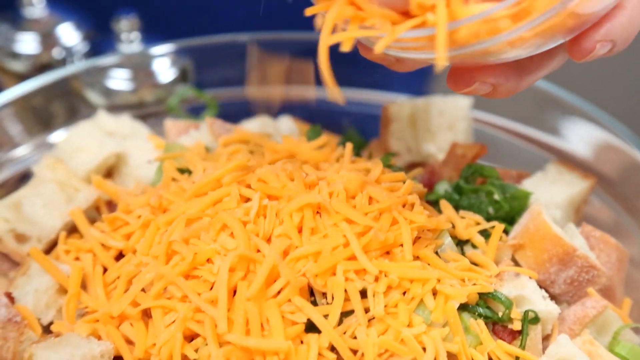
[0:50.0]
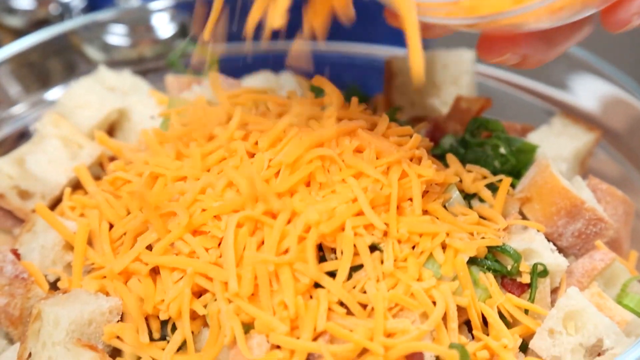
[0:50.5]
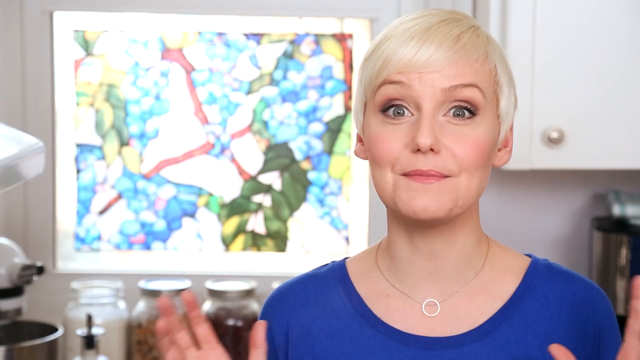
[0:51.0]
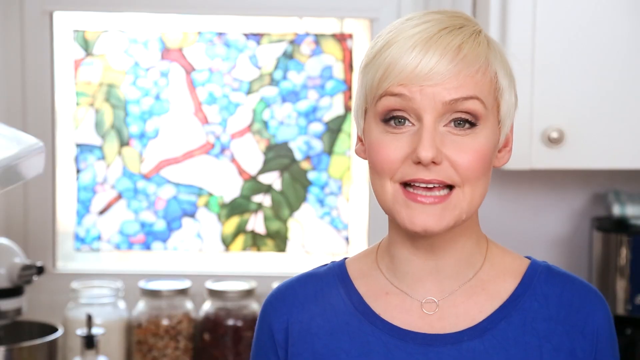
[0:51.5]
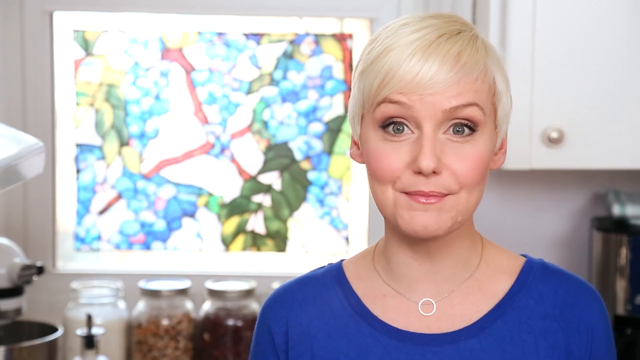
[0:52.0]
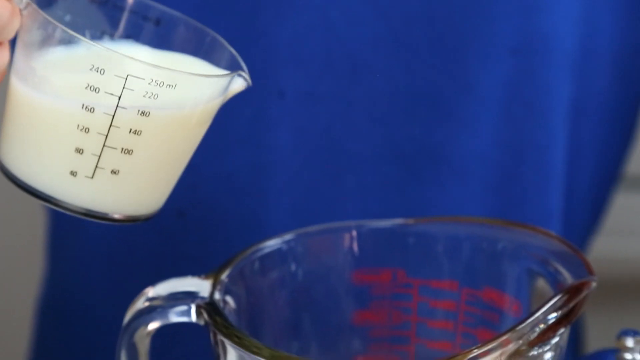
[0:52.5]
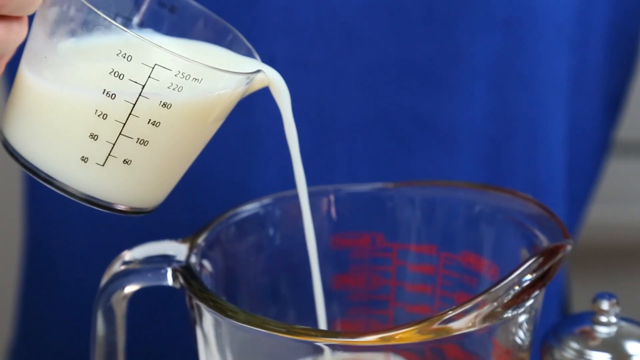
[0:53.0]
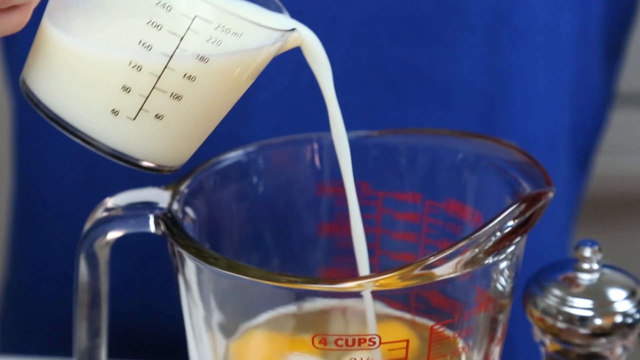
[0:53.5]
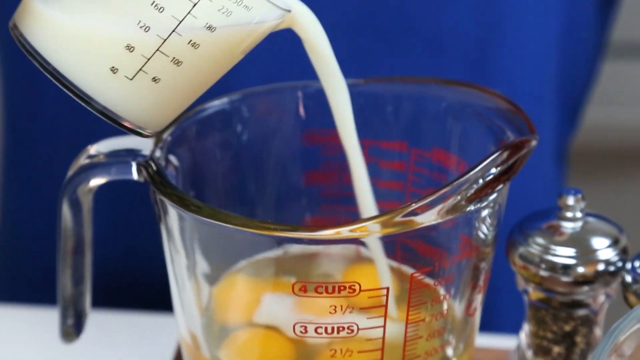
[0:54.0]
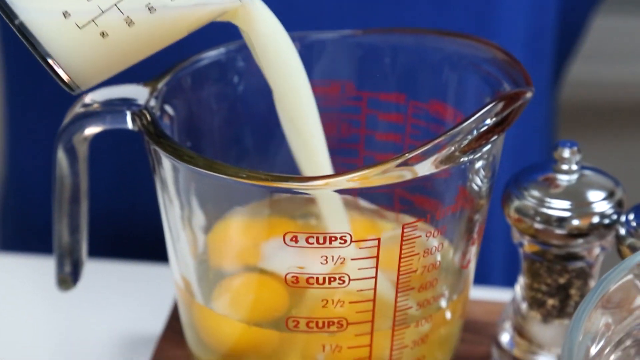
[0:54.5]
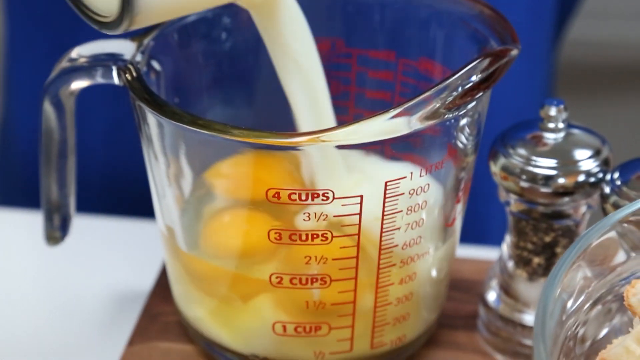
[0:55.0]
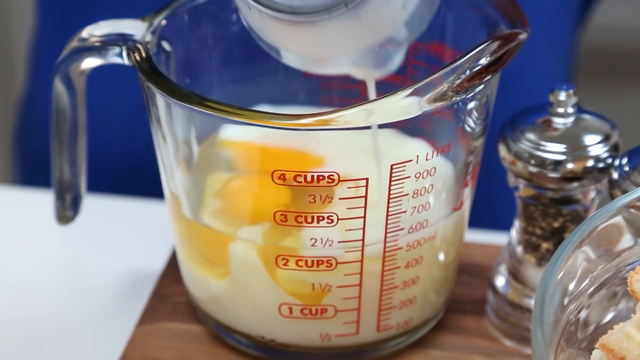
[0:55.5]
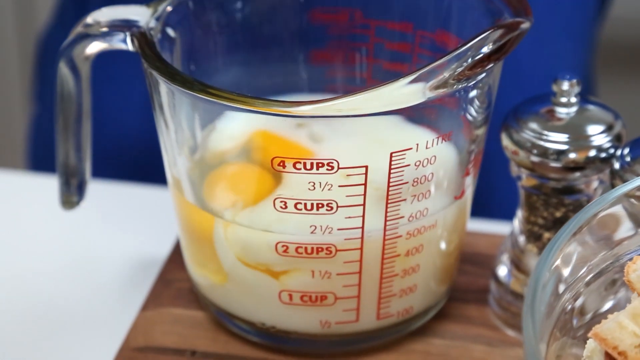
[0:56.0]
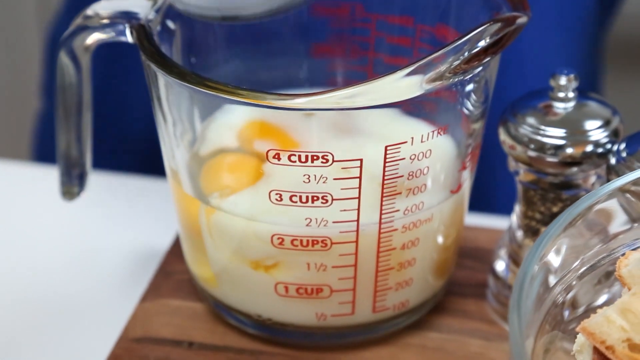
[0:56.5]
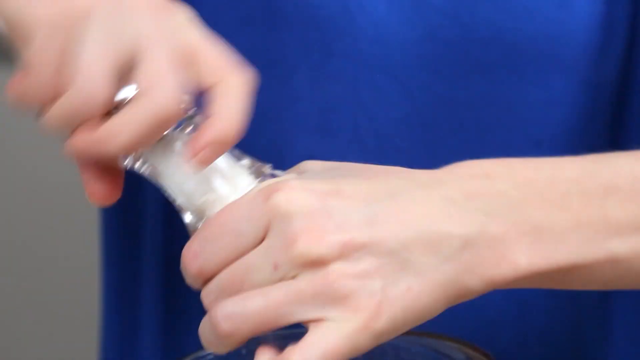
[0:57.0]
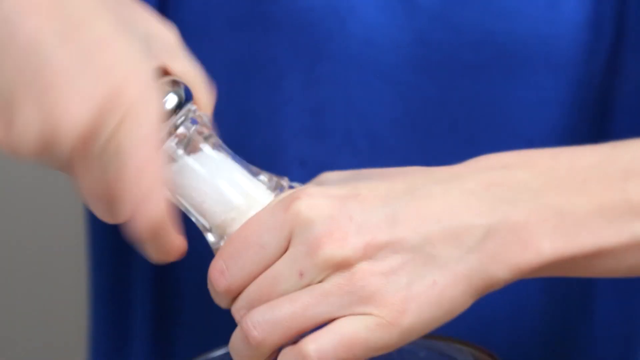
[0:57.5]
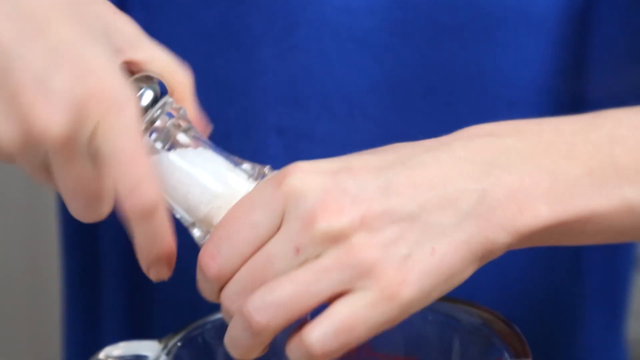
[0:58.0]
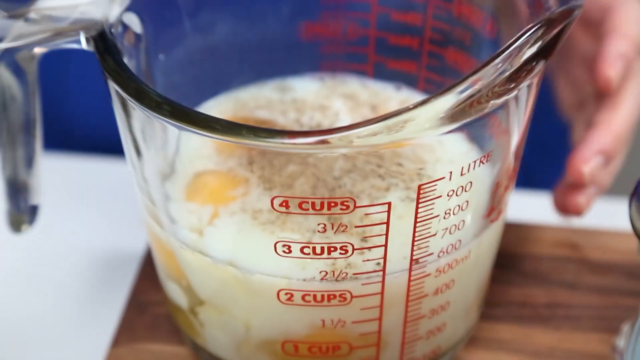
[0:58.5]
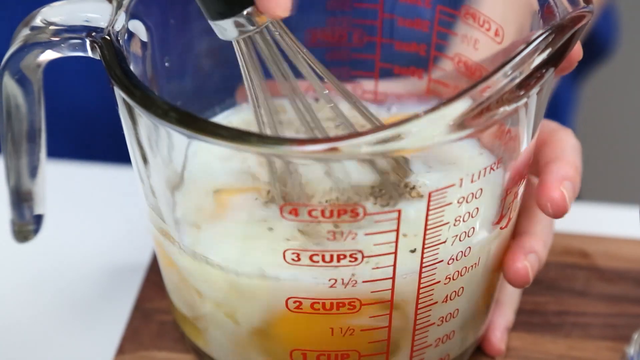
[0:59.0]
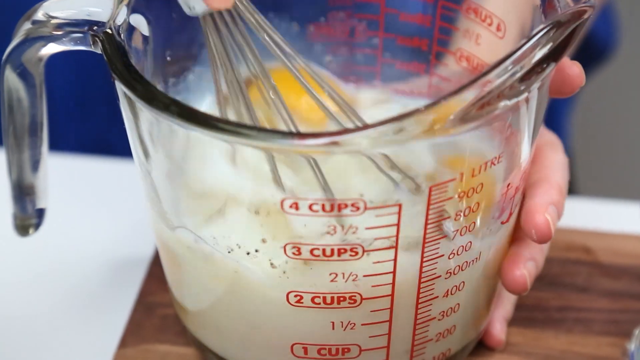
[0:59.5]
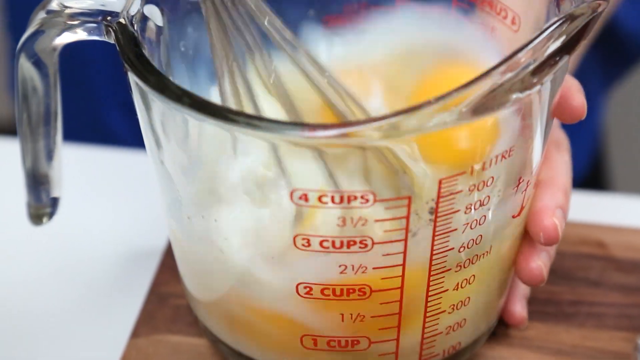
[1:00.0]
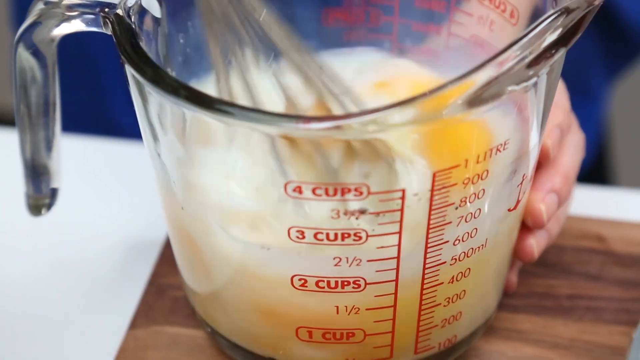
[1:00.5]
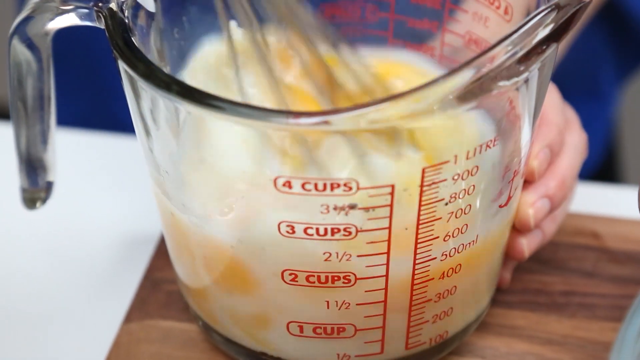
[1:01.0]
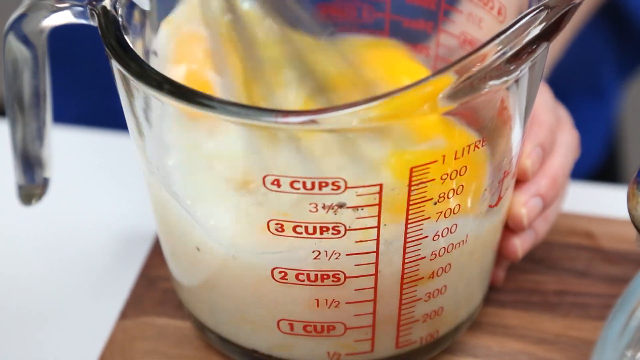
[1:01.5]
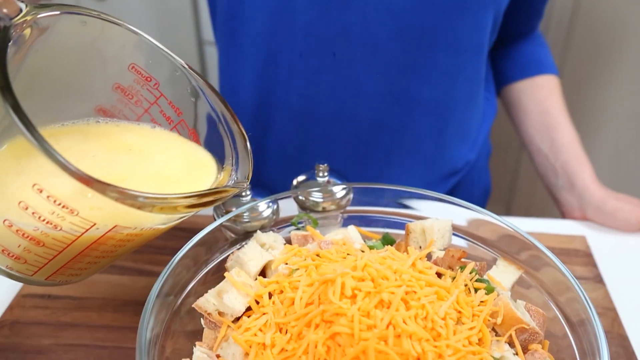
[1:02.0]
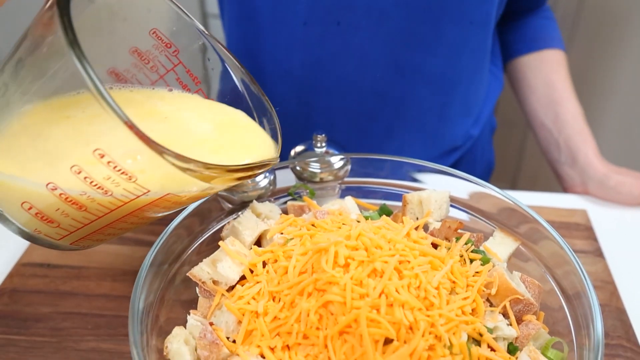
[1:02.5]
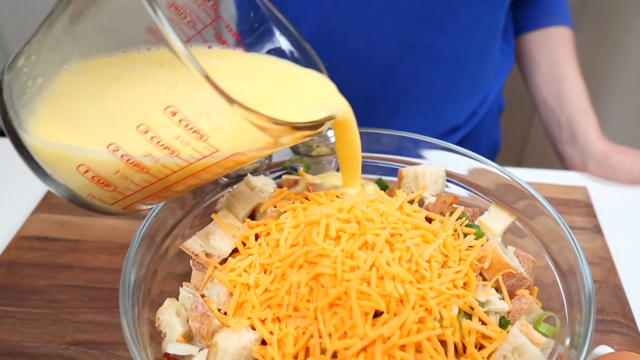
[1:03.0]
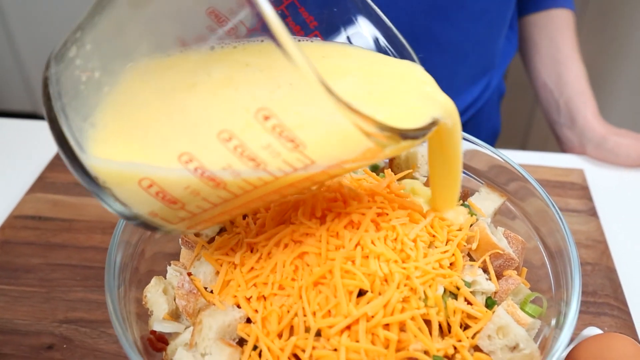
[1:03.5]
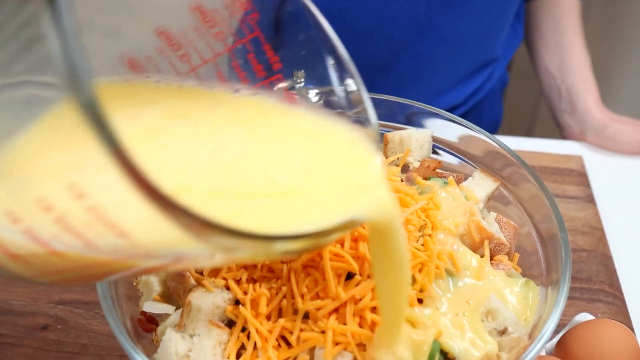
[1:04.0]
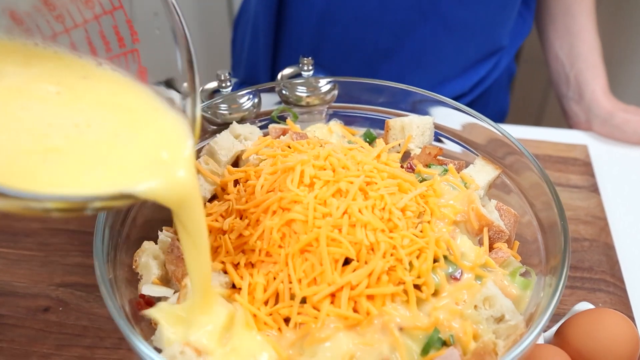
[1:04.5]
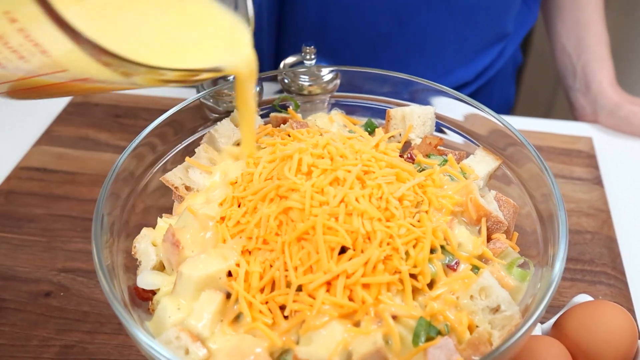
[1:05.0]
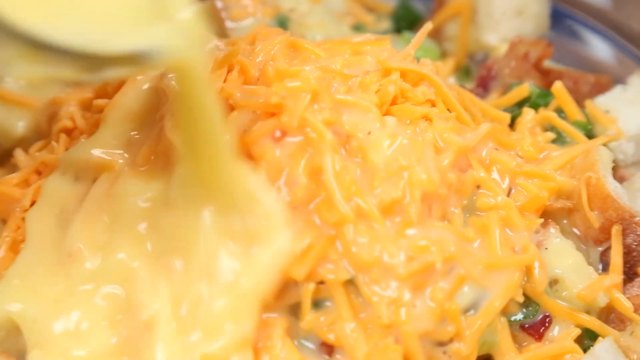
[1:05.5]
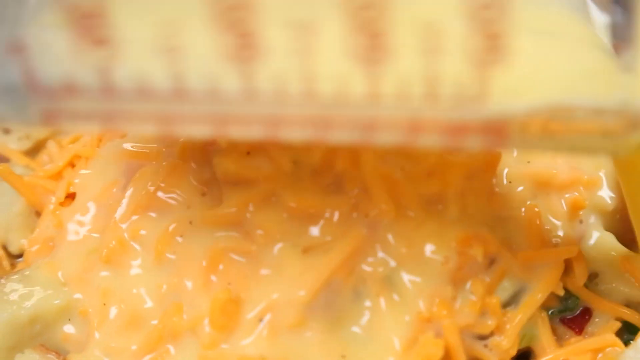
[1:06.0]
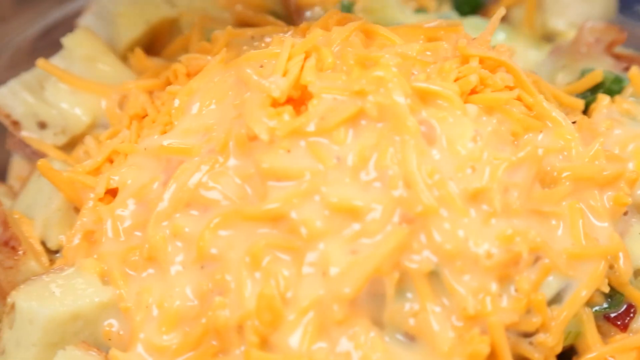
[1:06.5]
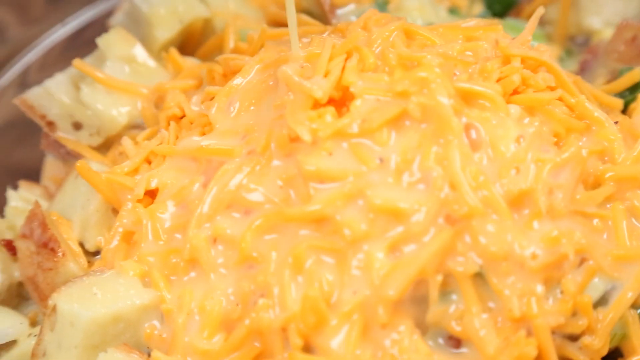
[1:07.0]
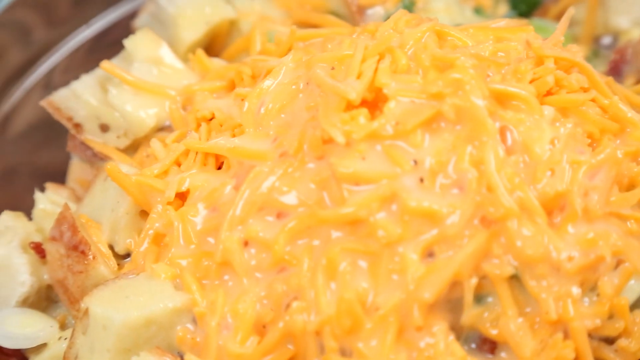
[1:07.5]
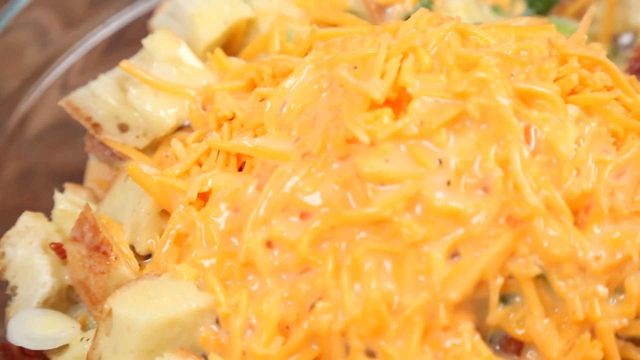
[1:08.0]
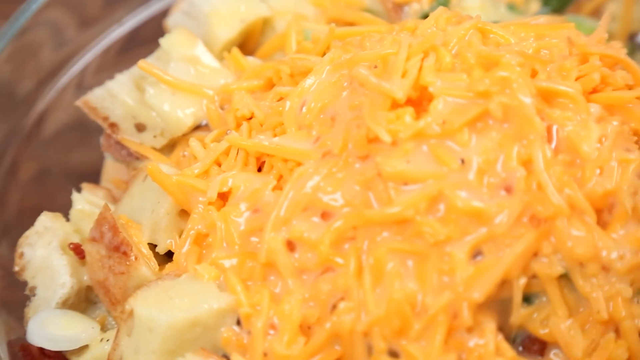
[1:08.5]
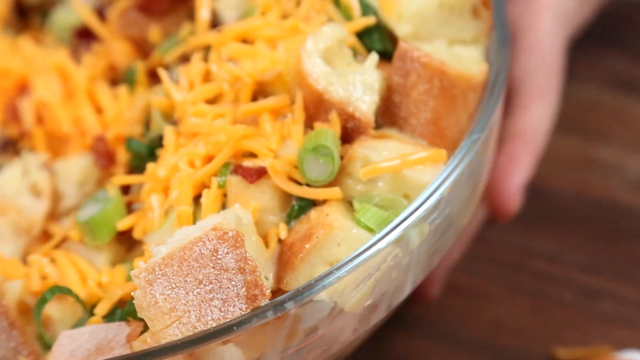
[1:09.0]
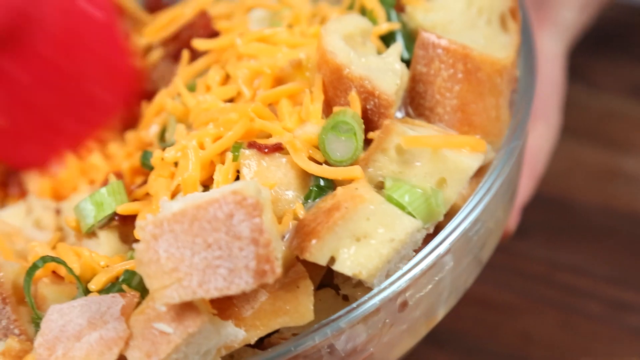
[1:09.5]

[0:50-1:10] A large bowl holds cheese on top of what looks to be cubed pieces of bread, with some greens and what also looks like some bacon. A woman speaks; she is white, looks to be maybe in her mid-30s, and has kind of platinum blonde hair that is very short, down to her ears. She wears a blue top with a circular neckline and a necklace with a circular pendant. After talking briefly, she pours a measuring cup of what looks to be milk into a larger measuring cup containing egg yolks. She takes a salt shaker and adds some salt, adds some pepper as well, then grabs a whisk and whisks the egg yolks and milk together in the very large measuring cup, which is on a brown wooden cutting board on a white table. She holds it with her left hand until the mixture becomes kind of uniform in texture. She then pours the egg yolk and milk mixture over the top of the bowl with the cheese, the cubed pieces of maybe baguette or fresh bread, and the chives, distributing it evenly until the entire measuring cup is emptied into the bowl.